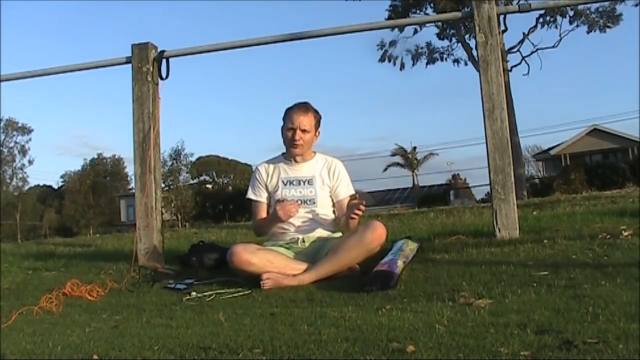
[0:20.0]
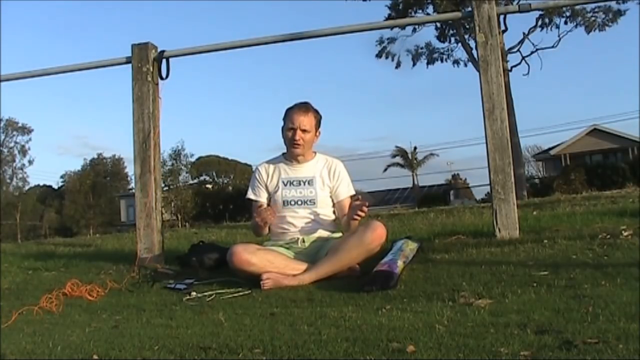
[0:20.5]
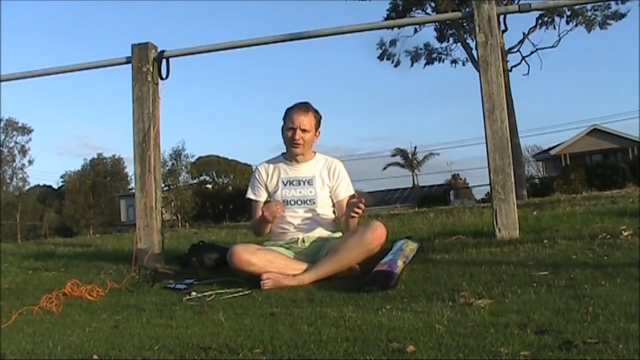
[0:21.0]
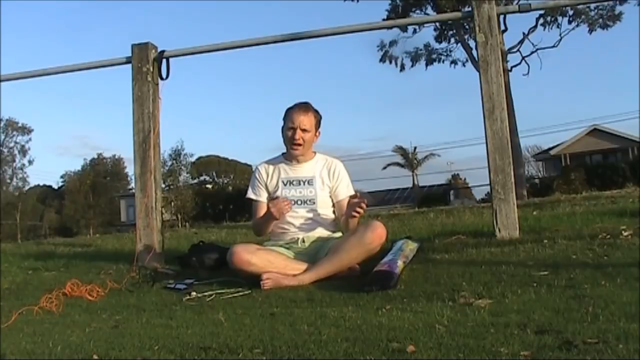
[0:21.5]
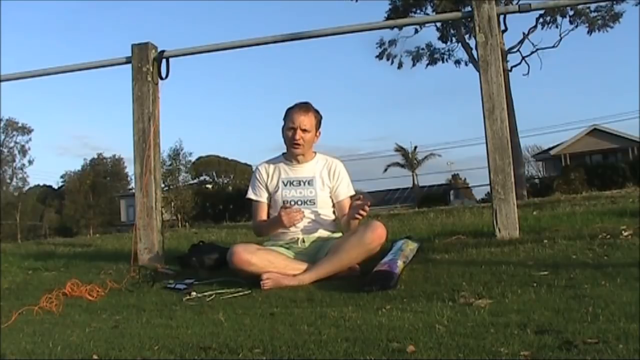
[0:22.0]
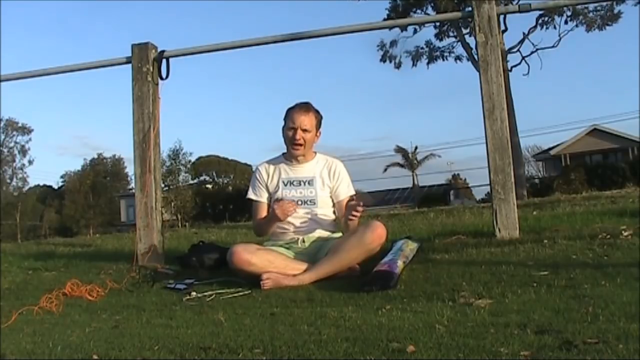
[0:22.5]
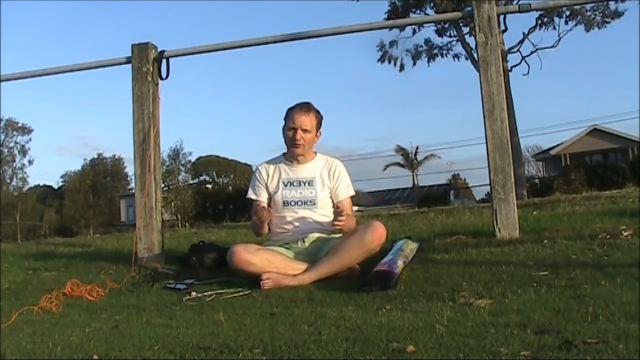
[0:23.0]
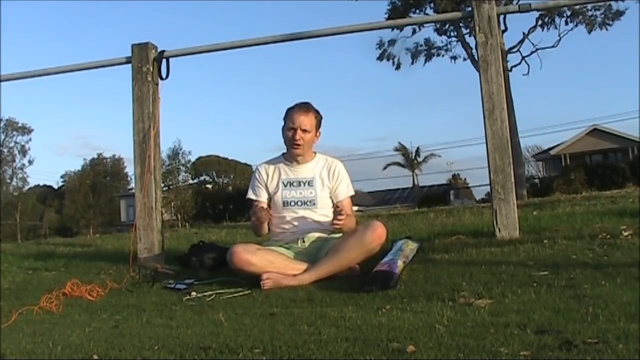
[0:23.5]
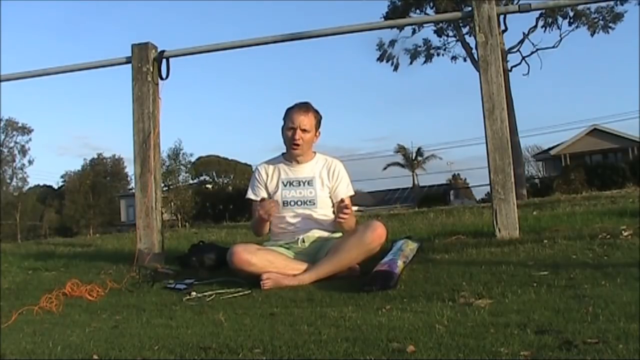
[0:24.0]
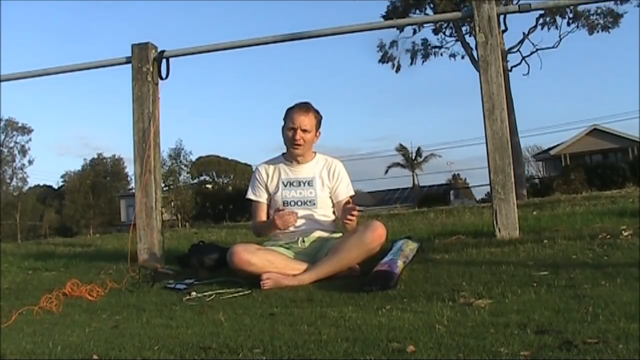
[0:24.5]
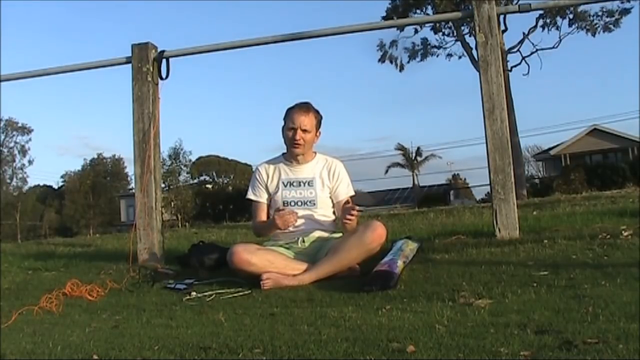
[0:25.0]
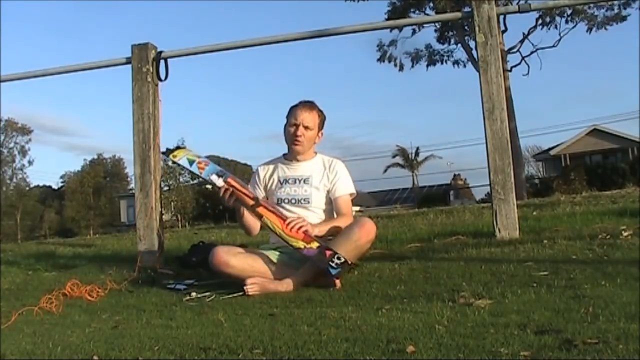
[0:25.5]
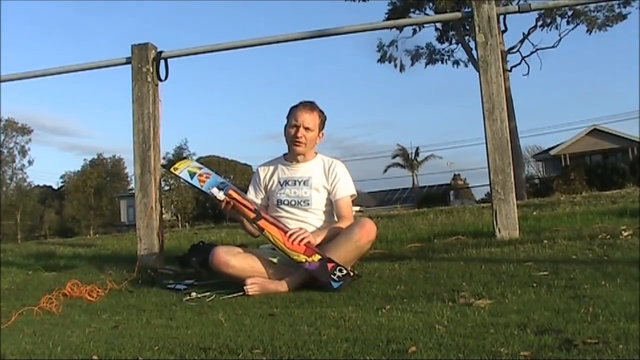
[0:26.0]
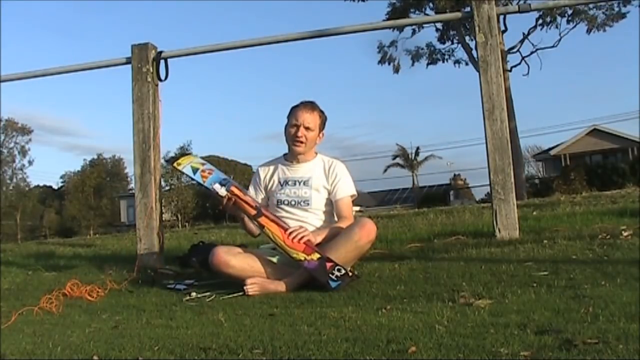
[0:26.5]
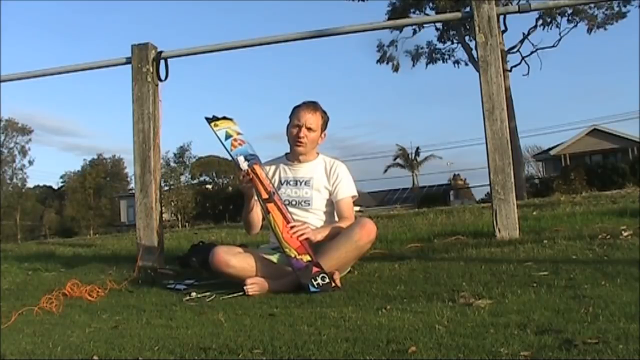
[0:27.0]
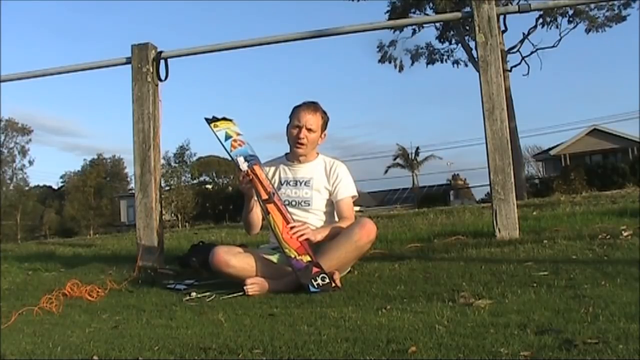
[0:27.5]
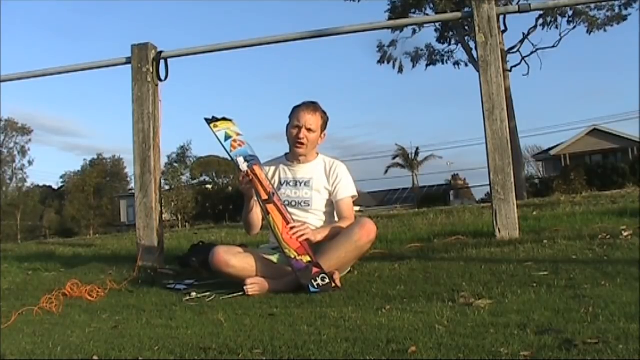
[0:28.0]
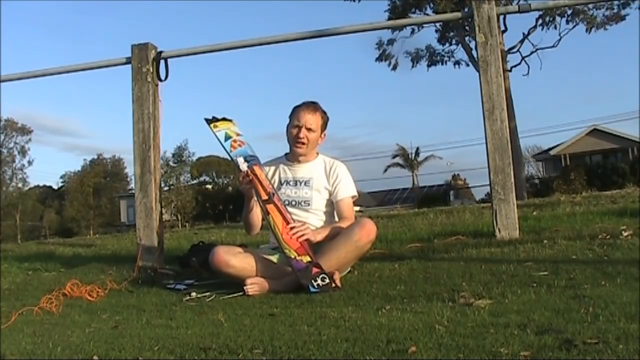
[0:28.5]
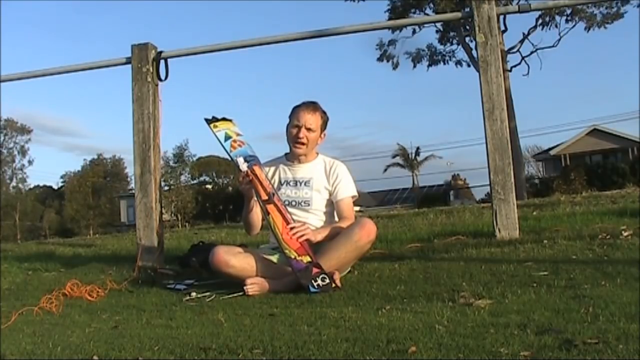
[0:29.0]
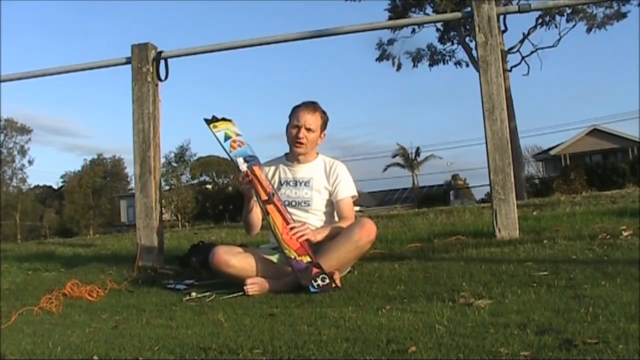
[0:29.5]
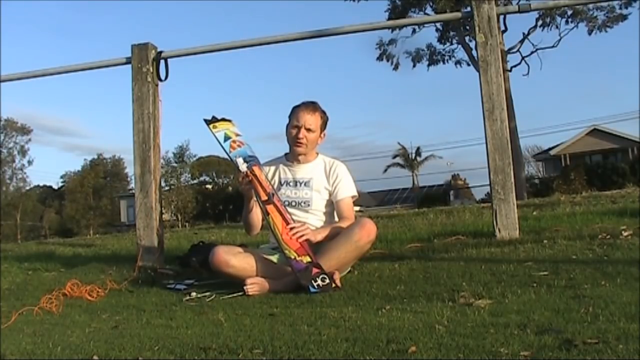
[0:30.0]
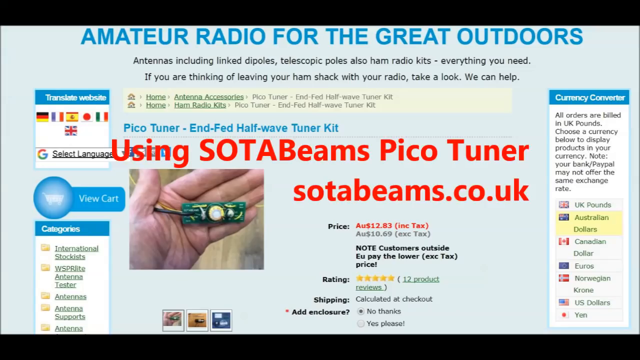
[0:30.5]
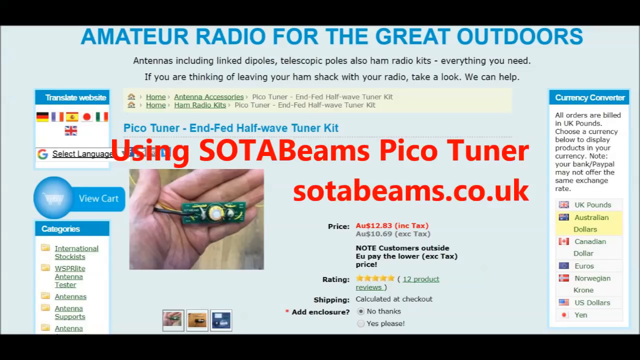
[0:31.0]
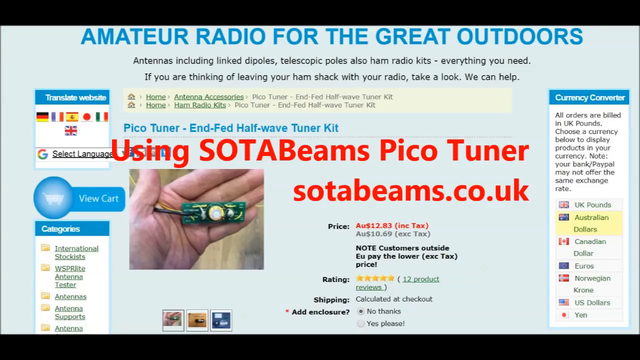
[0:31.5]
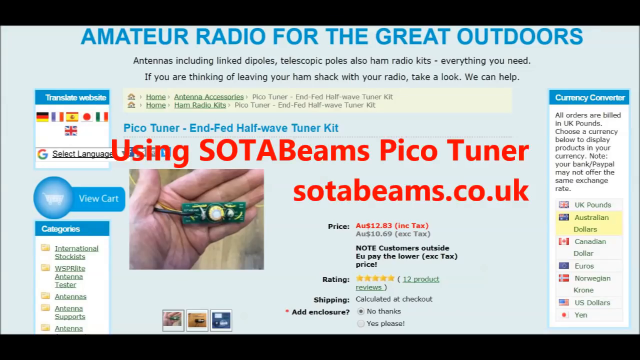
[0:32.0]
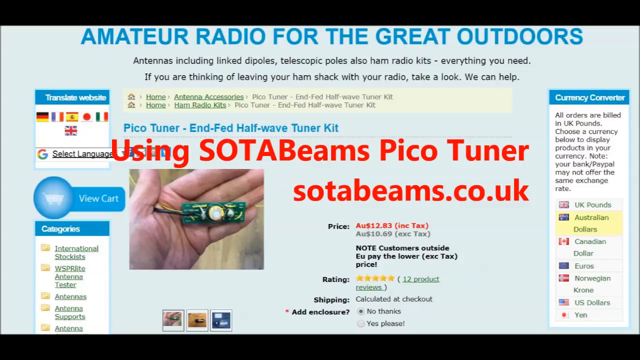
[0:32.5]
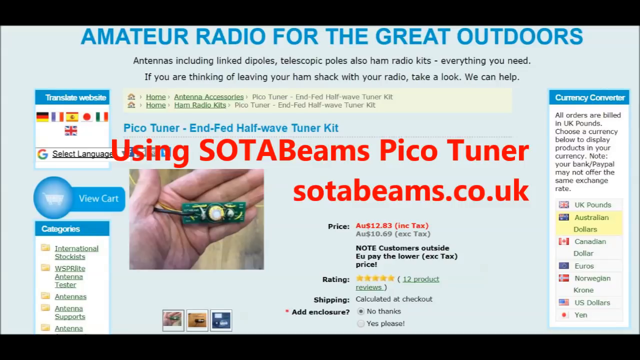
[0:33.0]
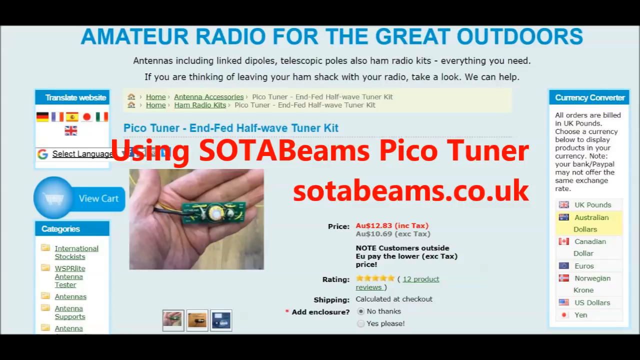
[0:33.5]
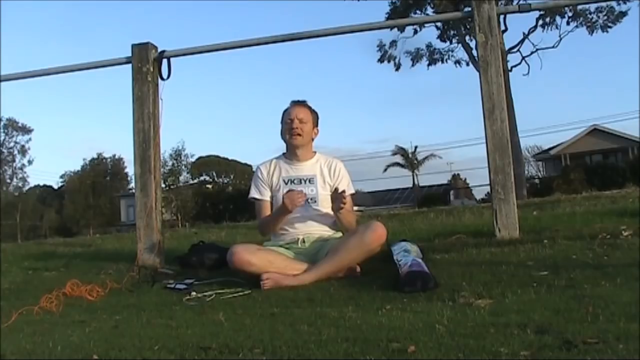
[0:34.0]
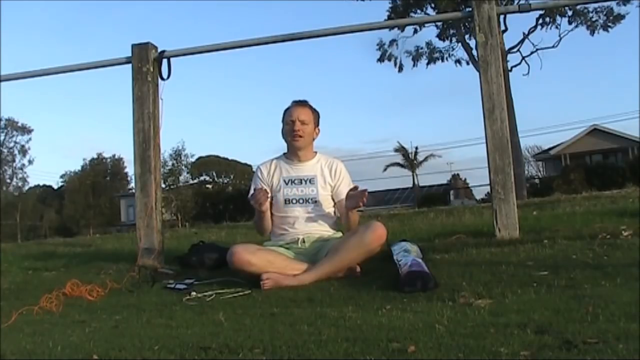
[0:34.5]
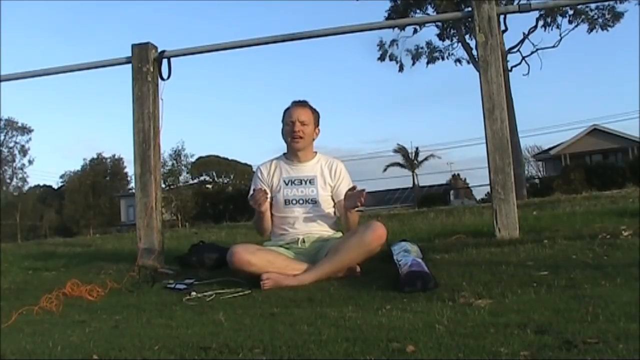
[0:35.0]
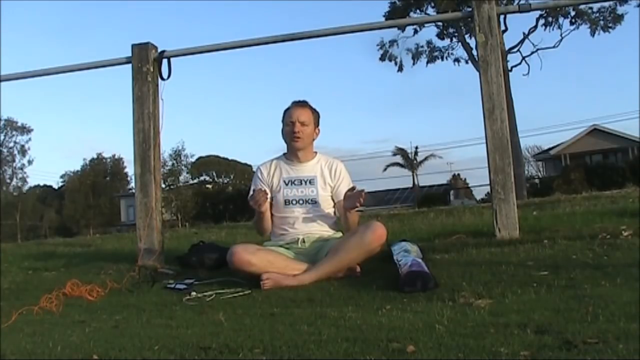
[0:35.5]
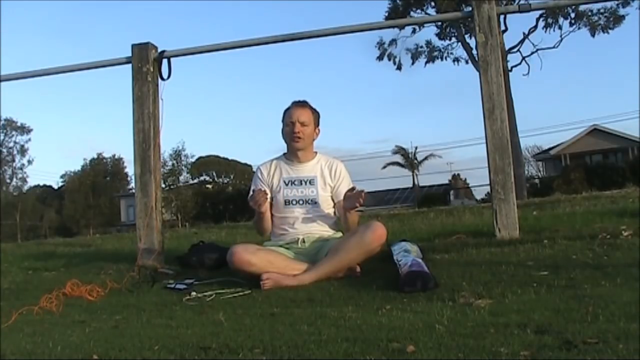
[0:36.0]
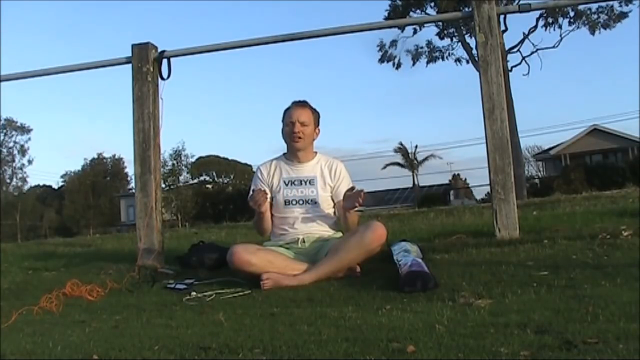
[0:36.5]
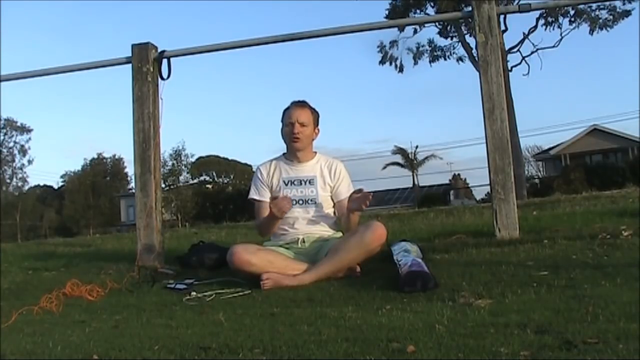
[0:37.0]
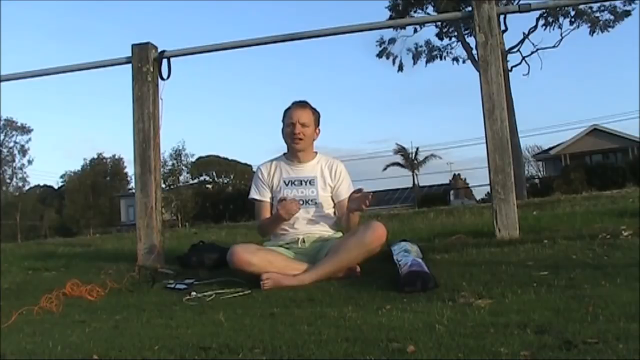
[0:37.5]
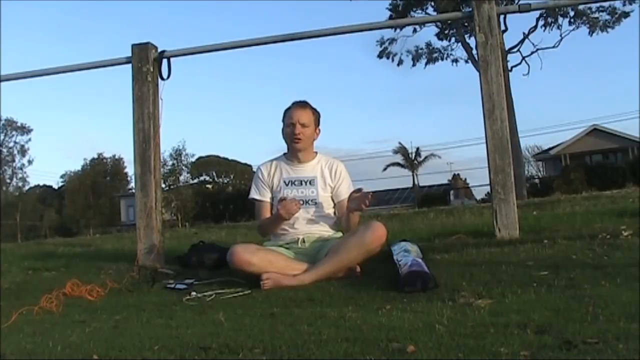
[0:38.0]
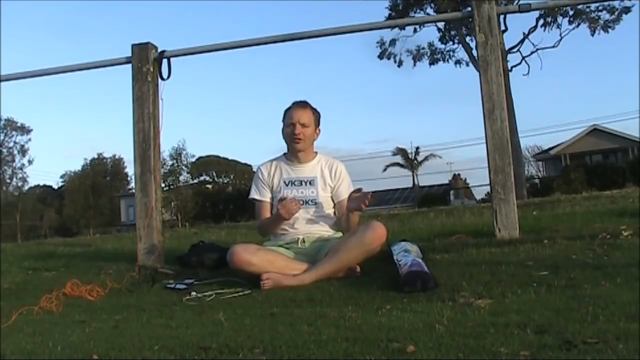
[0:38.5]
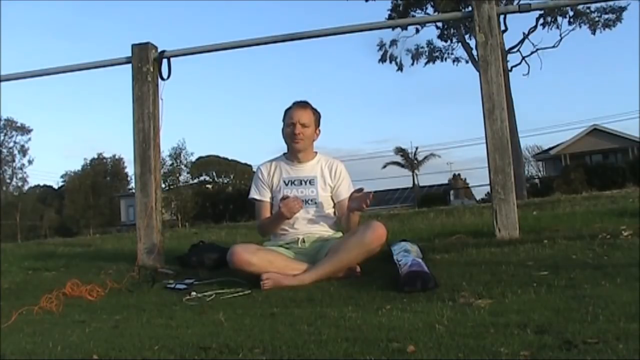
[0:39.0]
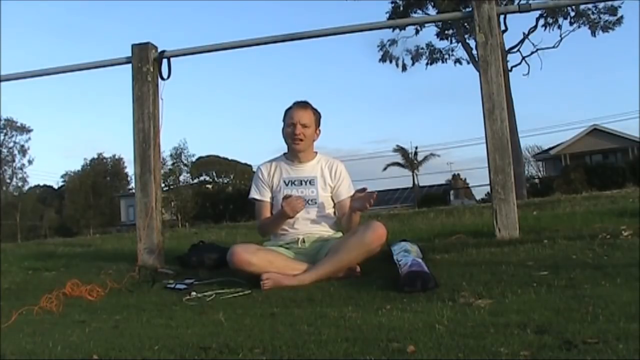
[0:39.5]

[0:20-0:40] A man who flies a kite with some type of antenna sits cross-legged on the grass. He is white, has short hair, and wears green shorts and an off-white t-shirt that says something about radio books. He talks with his hands. Around him are a number of accoutrements: what appear to be lines for the kite and some packages, one of which apparently holds the kite or is what it folds up into. Behind him are houses and trees, suggesting he may be in Australia rather than America. The fence has raw-wood-looking square posts, a metal bar along the top like a chain-link fence bar, and wires running straight across the middle. He talks to the audience with his hands, then gets out a kite package and talks about it. The video then switches to a website with the text "Amateur Radio for the Great Outdoors," showing "using SOTABeams PicoTuner" and "SOTABeams.co.uk," along with many options to order things.